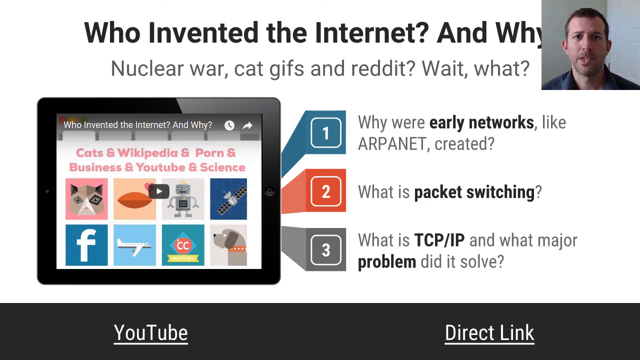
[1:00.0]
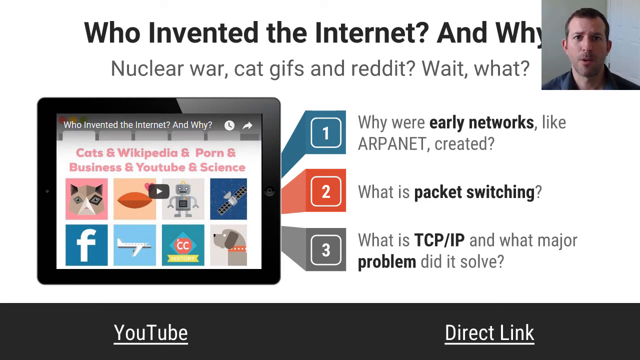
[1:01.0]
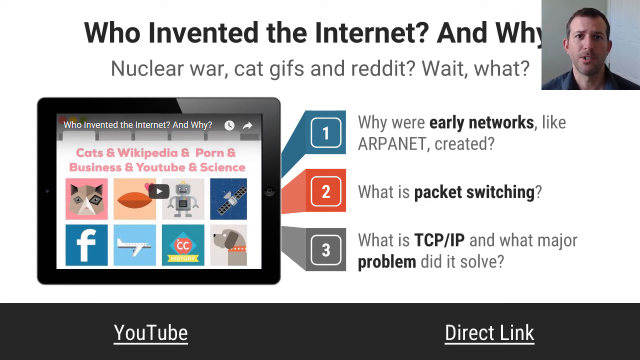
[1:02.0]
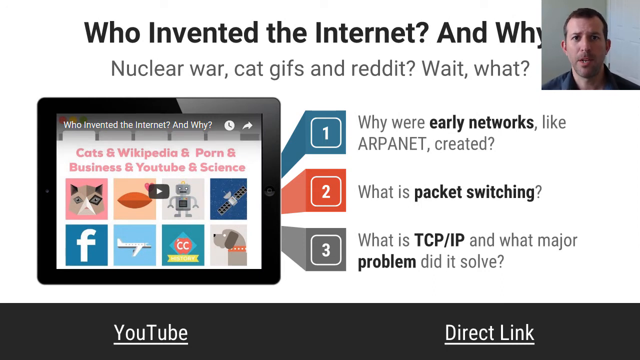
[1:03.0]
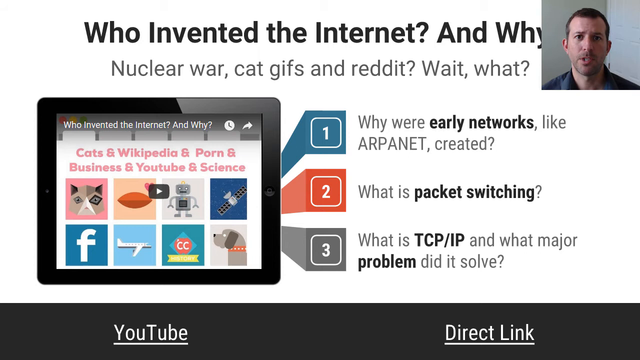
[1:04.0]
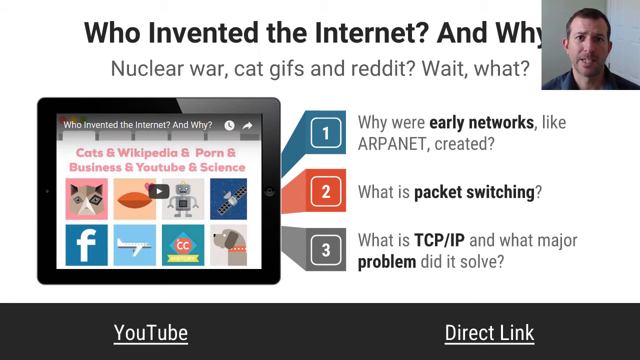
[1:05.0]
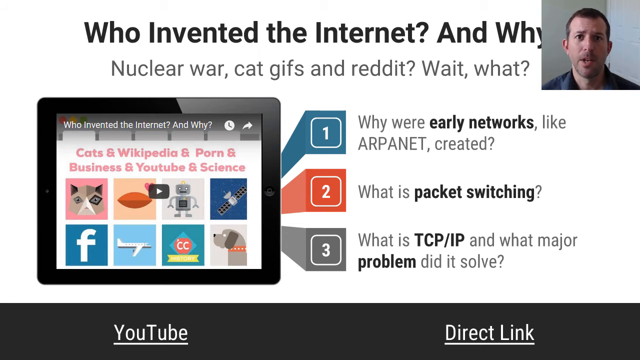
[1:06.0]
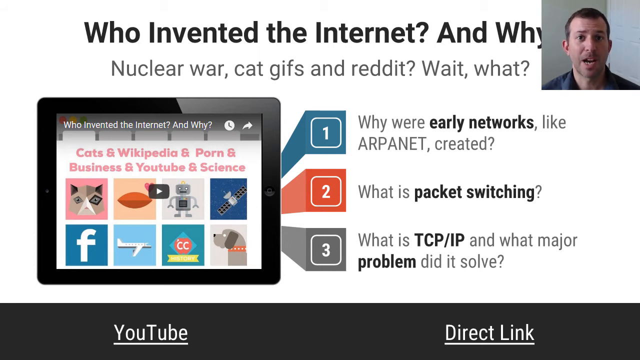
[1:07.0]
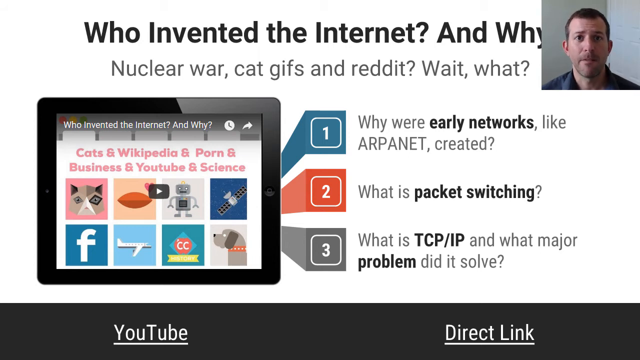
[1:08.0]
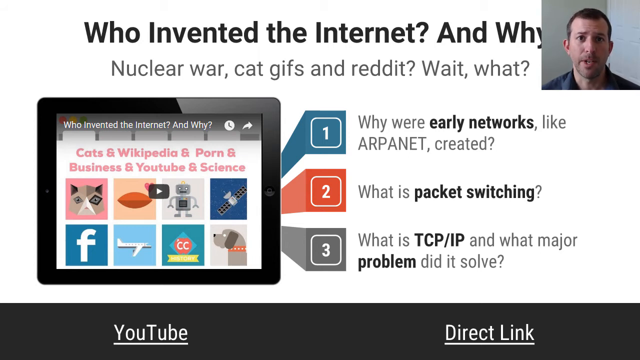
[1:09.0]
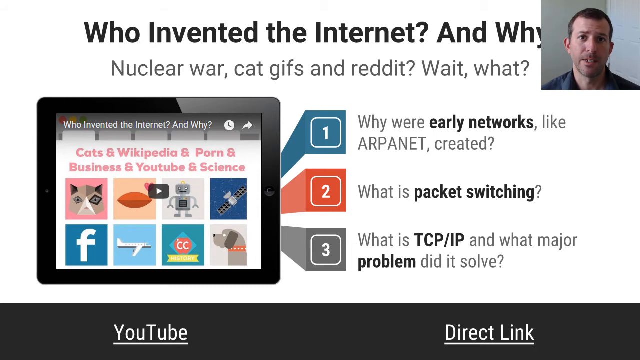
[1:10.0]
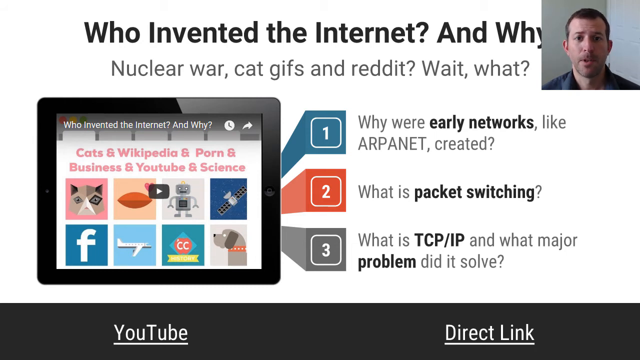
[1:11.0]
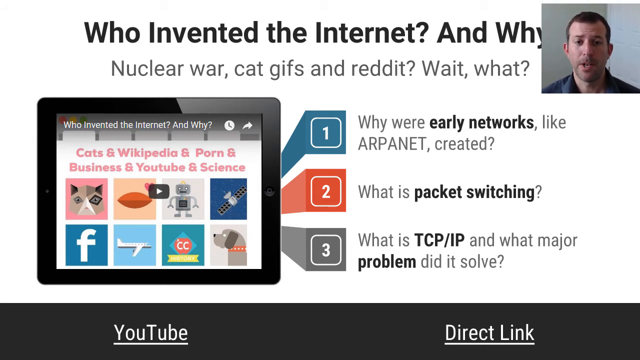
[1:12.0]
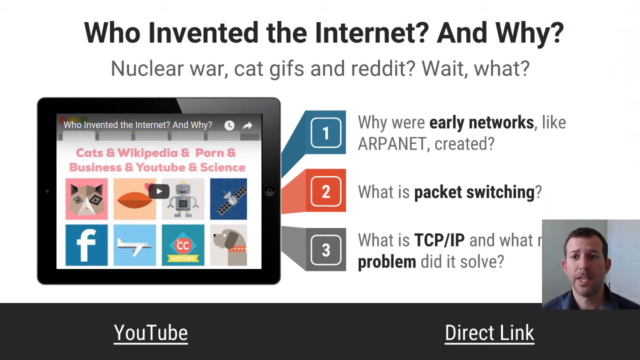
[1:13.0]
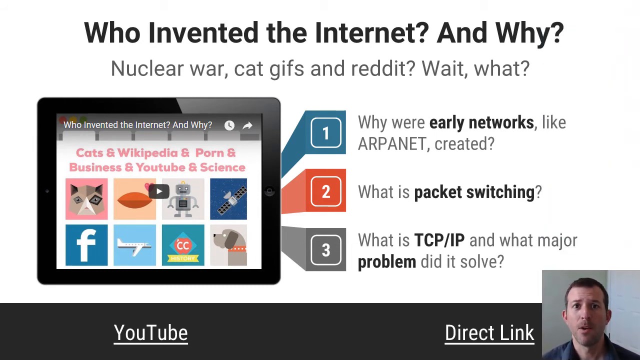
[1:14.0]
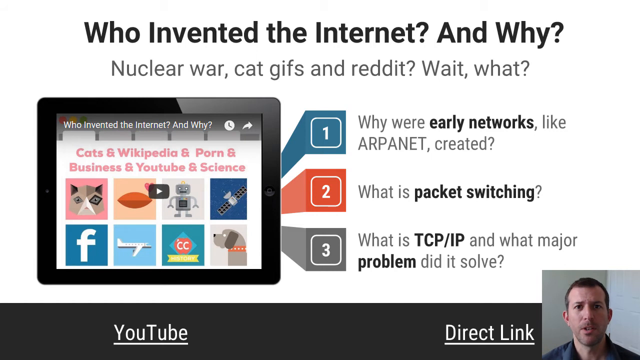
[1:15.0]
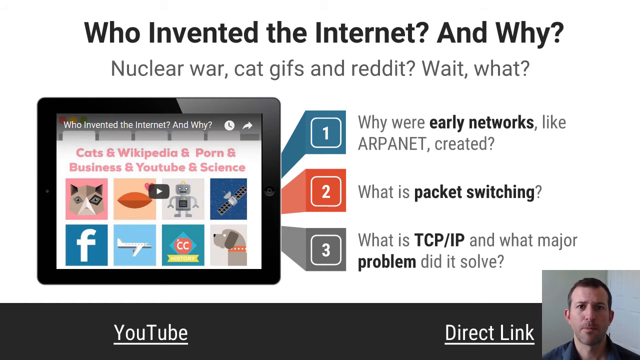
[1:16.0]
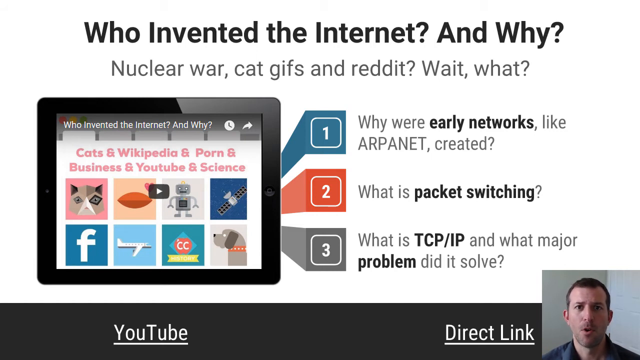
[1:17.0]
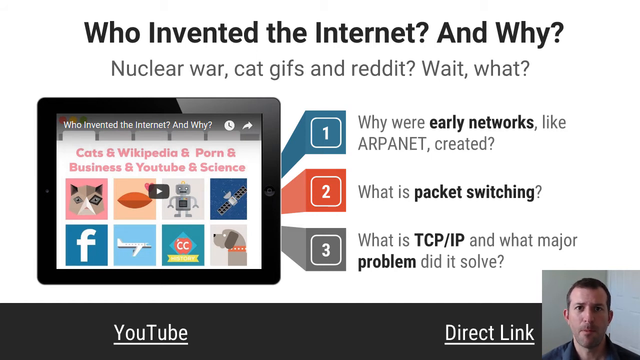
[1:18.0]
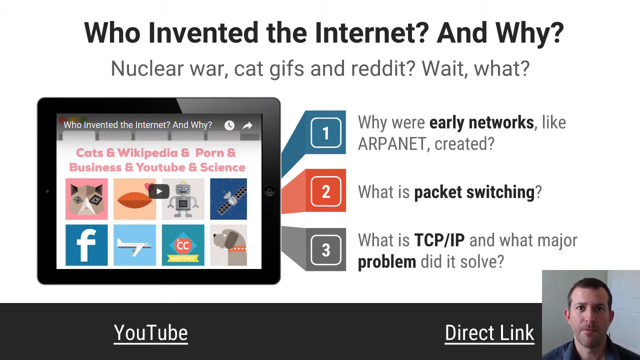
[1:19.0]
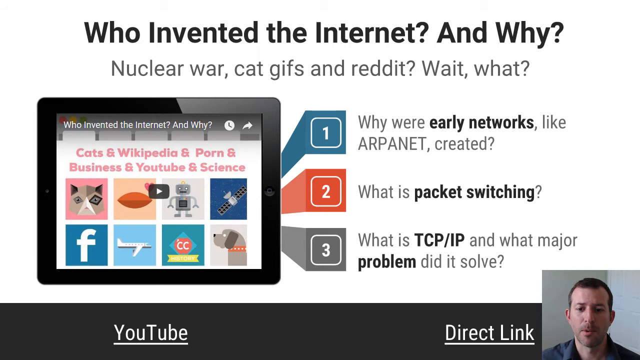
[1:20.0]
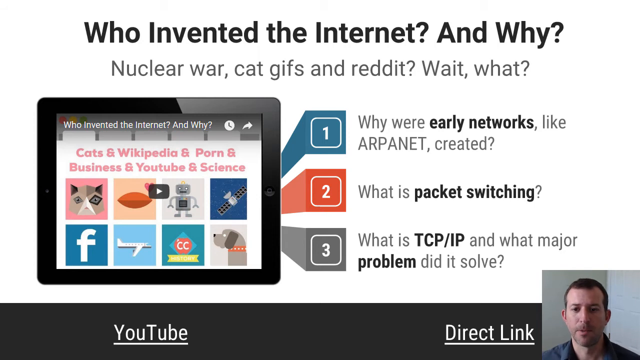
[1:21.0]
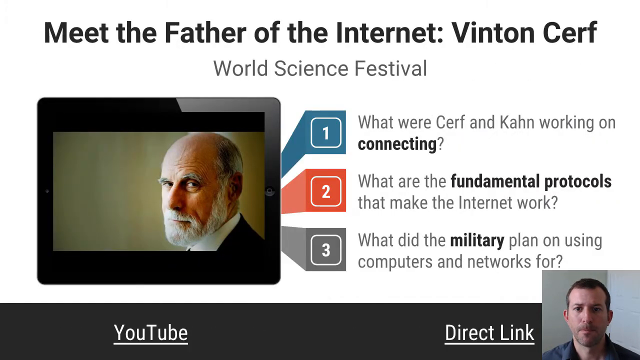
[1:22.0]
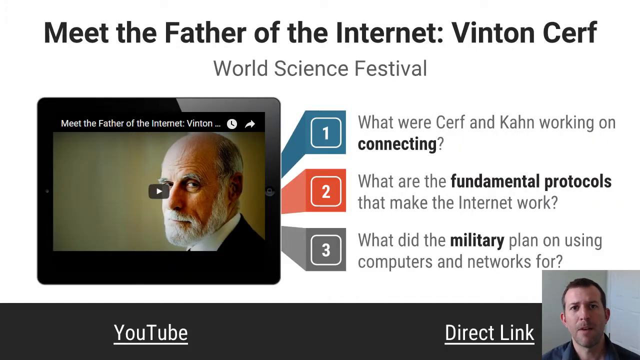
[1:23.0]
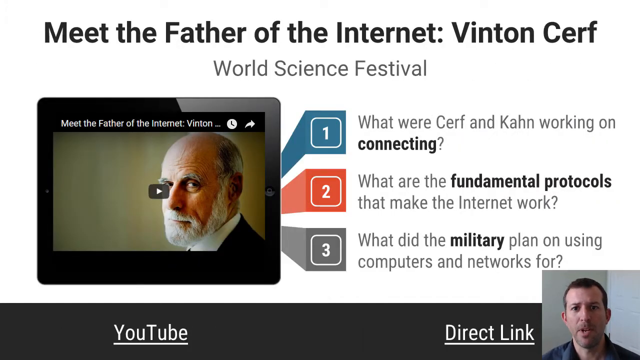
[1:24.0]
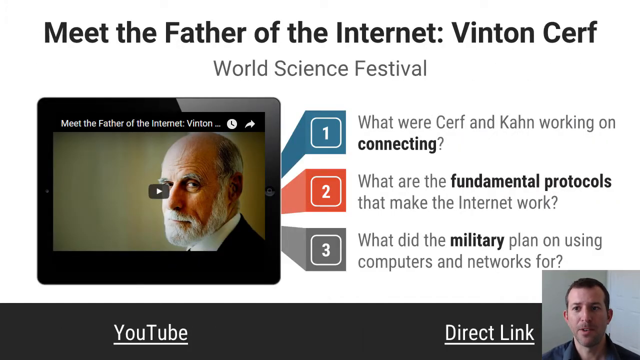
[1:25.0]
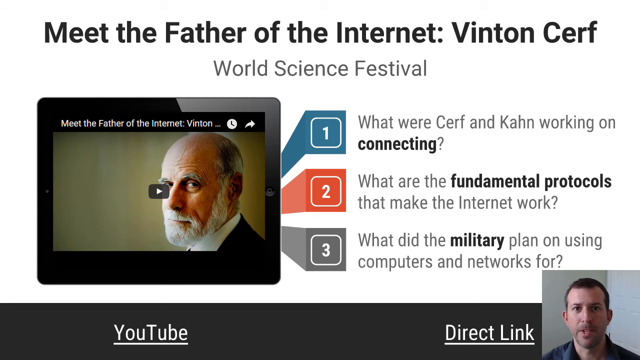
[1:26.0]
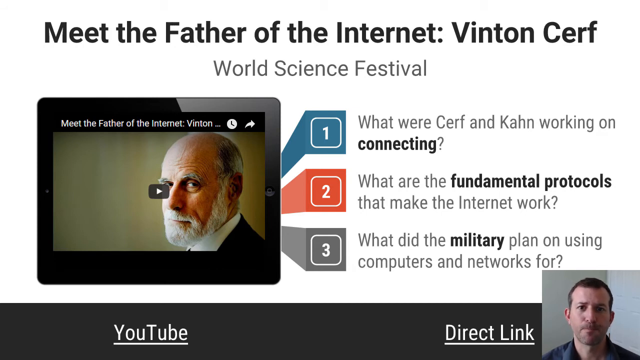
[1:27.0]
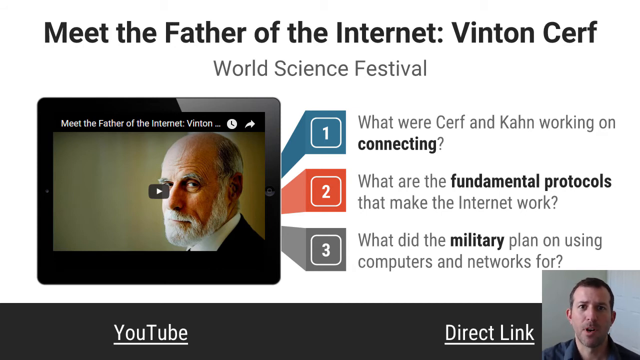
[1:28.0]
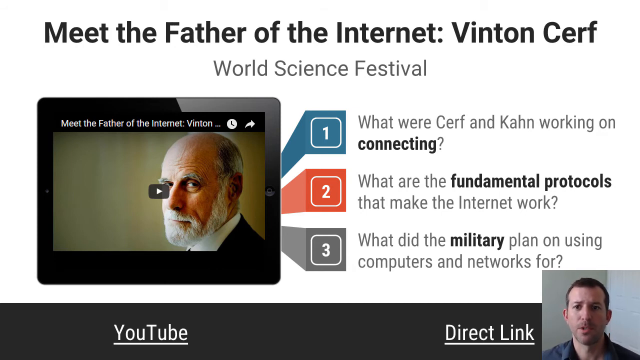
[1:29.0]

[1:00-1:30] Partway through the slide, the video of the narrator at the top right of the screen drops fairly slowly to the bottom of the screen, ending up in the bottom right corner. Another slide then moves quickly from left to right. It has a white background, with black text at the top reading "Meet the Father of the Internet, Vincent Cerf" and grey text beneath reading "World Science Festival". On the left is a picture of a monitor showing a video still of Vincent Cerf, who is mostly bald with short grey hair at the back and a neat white beard and moustache. He stands on the right side of the image, looking at the camera, posed with his face and back at a 45-degree angle to the camera.